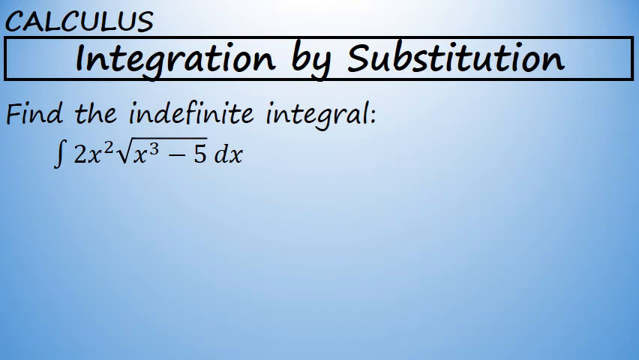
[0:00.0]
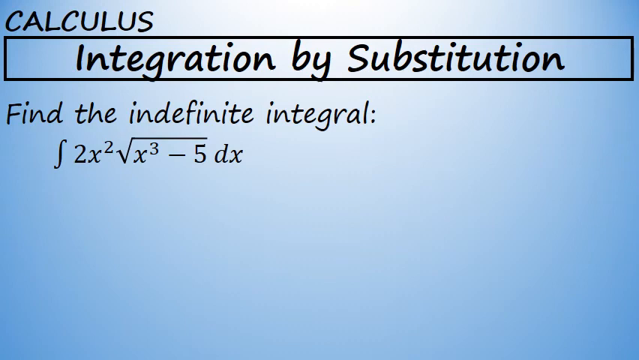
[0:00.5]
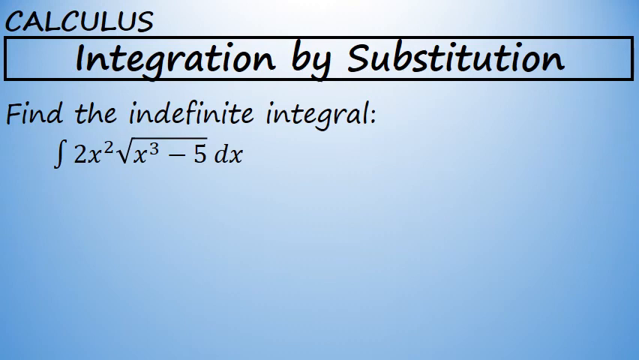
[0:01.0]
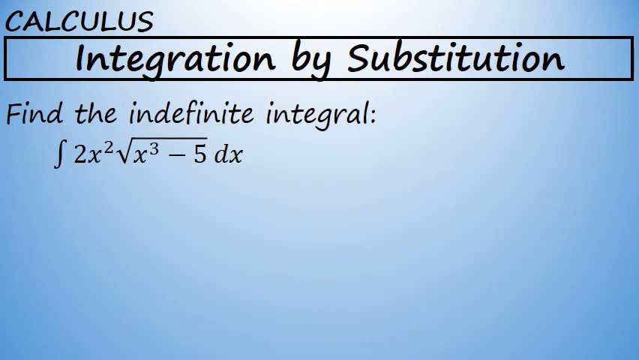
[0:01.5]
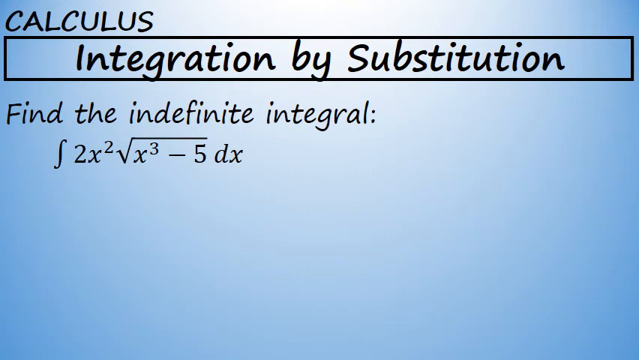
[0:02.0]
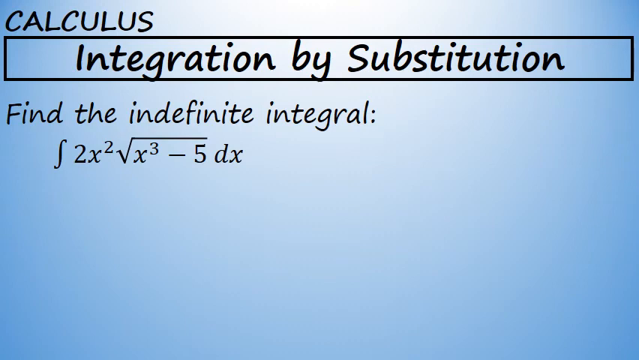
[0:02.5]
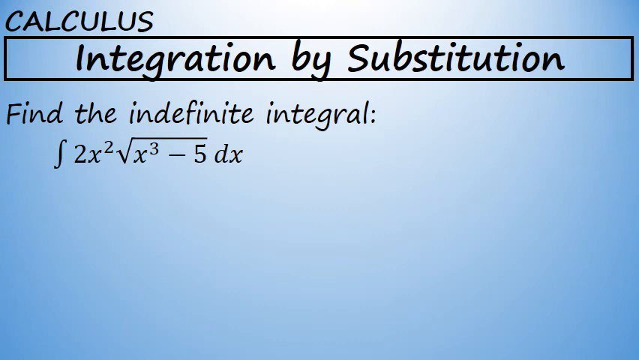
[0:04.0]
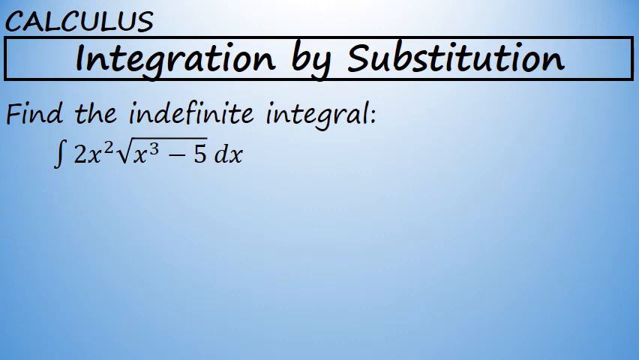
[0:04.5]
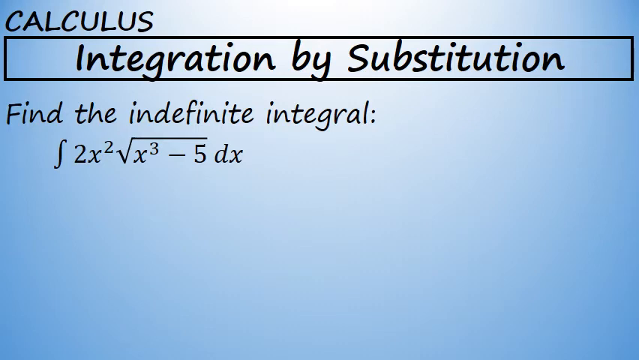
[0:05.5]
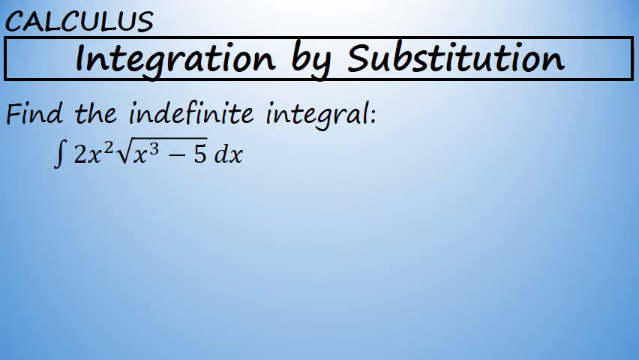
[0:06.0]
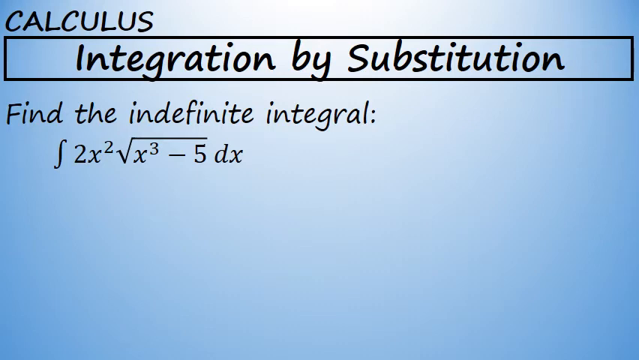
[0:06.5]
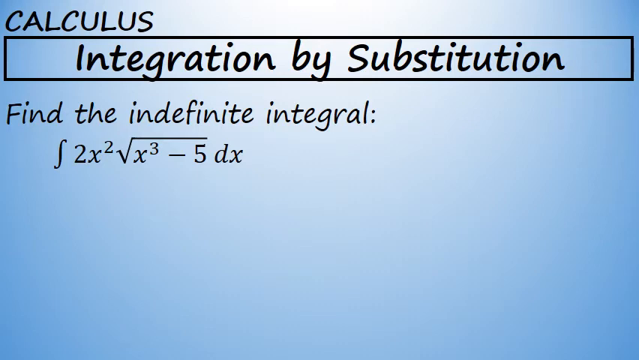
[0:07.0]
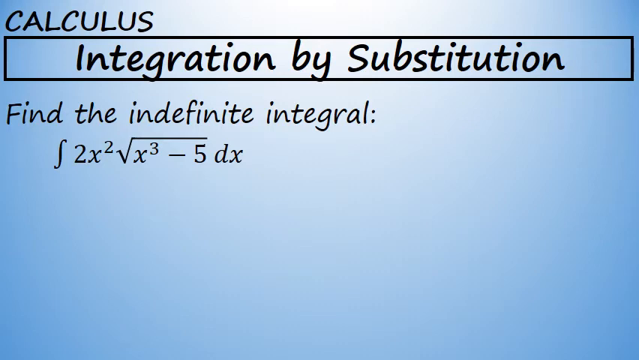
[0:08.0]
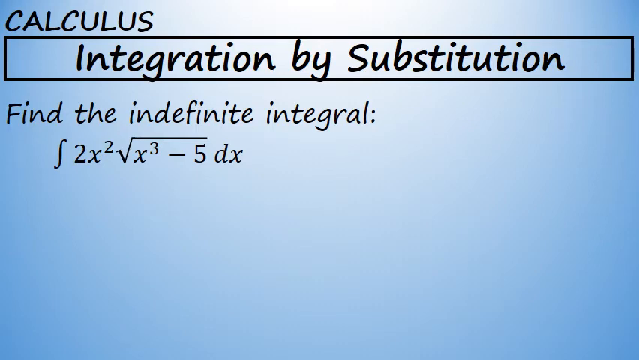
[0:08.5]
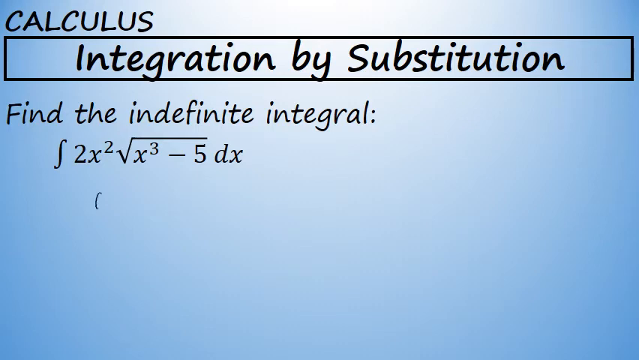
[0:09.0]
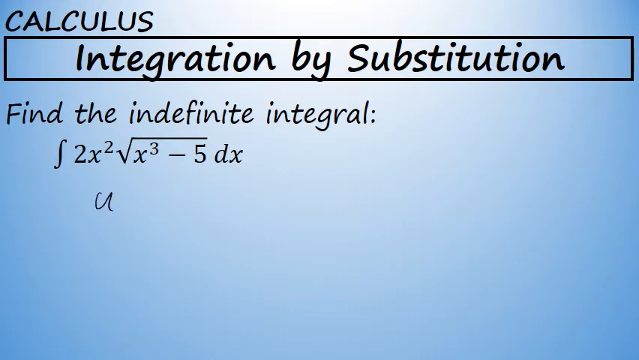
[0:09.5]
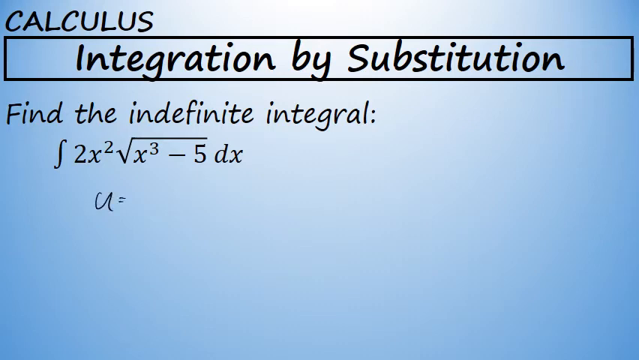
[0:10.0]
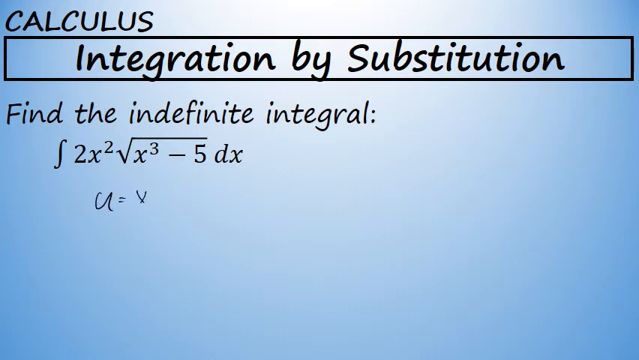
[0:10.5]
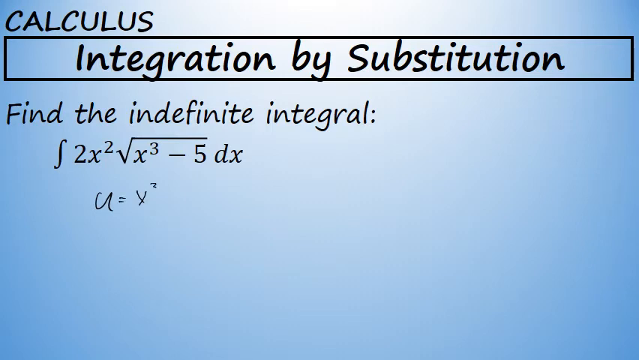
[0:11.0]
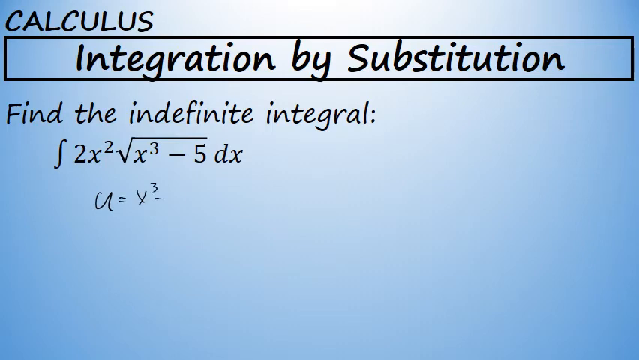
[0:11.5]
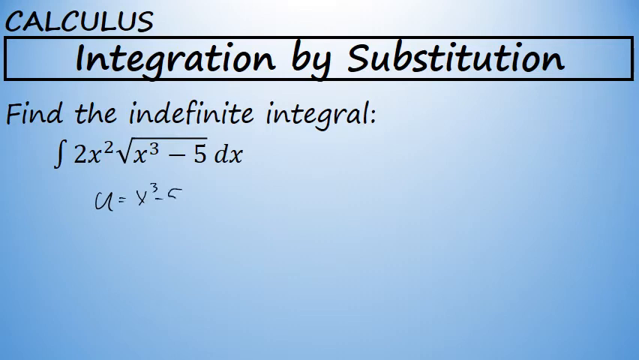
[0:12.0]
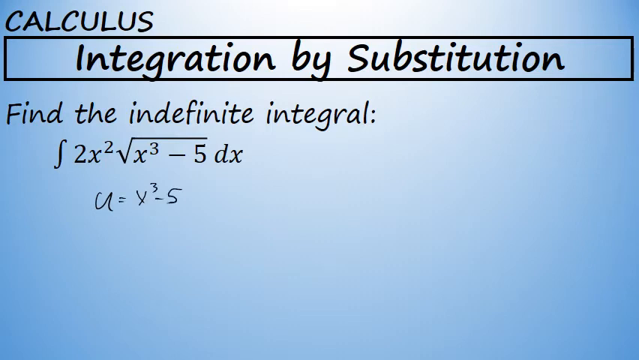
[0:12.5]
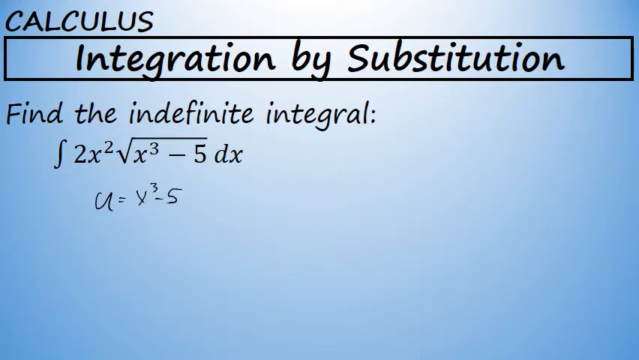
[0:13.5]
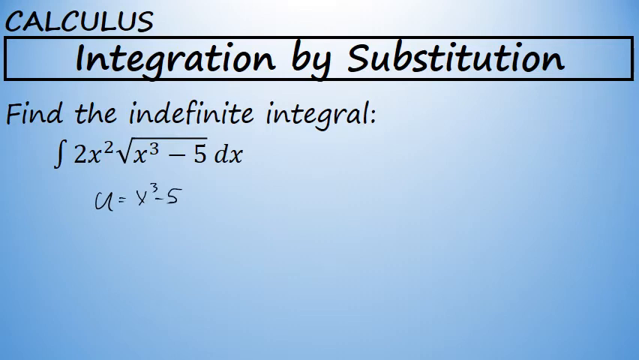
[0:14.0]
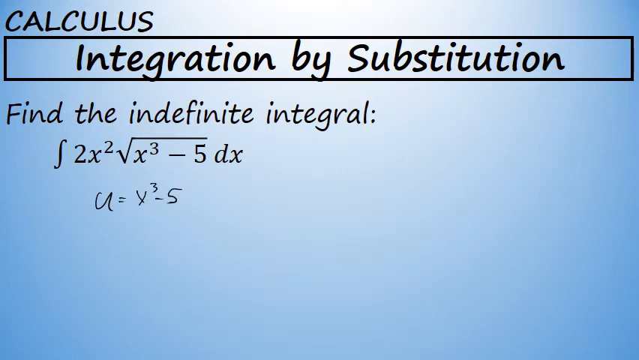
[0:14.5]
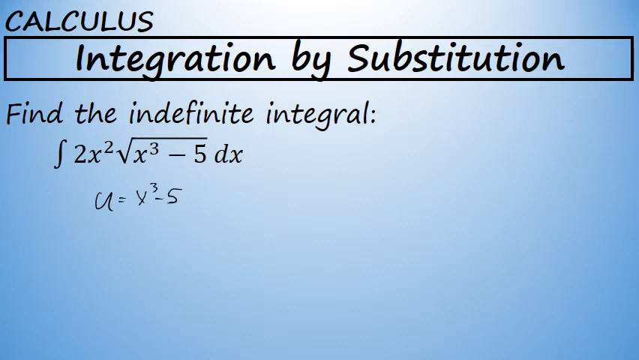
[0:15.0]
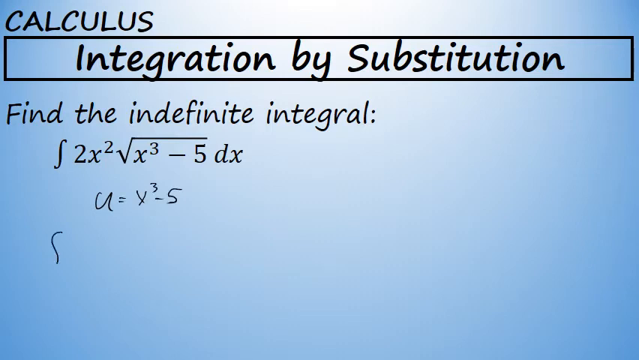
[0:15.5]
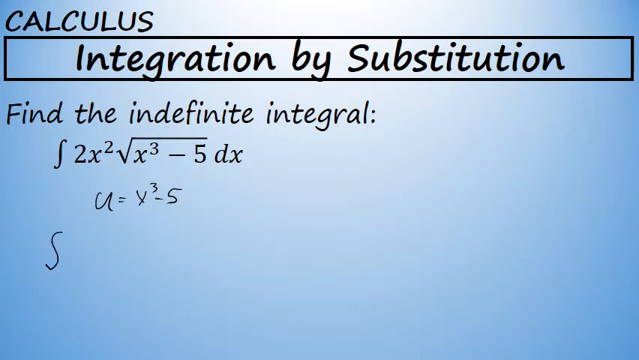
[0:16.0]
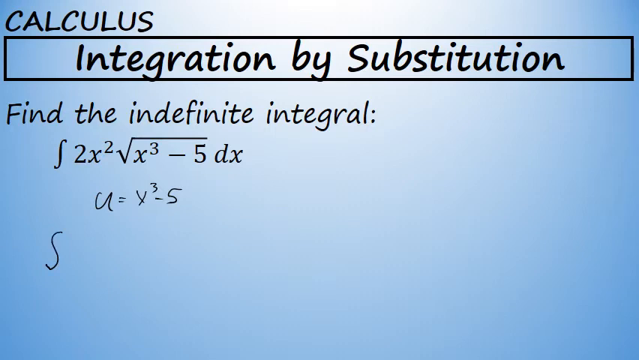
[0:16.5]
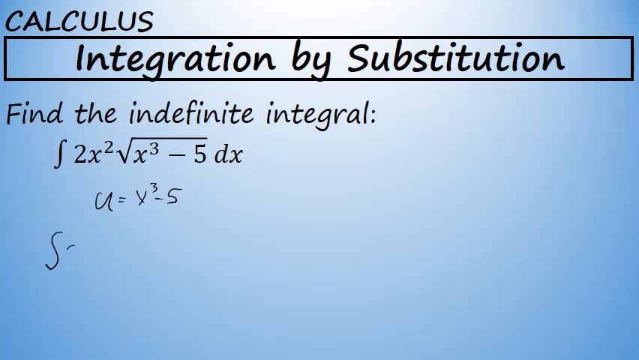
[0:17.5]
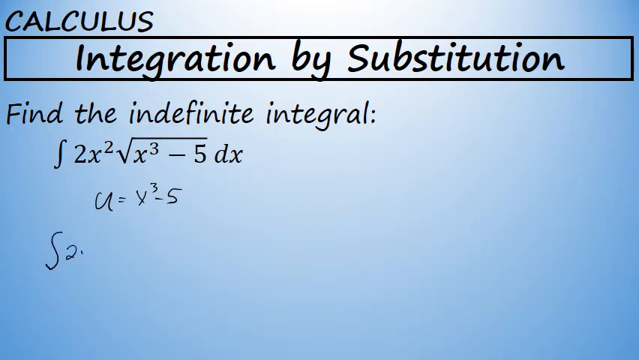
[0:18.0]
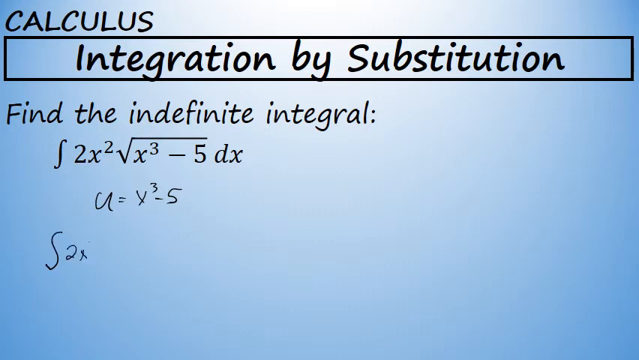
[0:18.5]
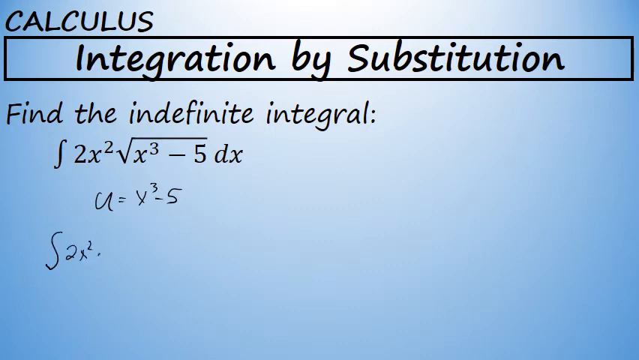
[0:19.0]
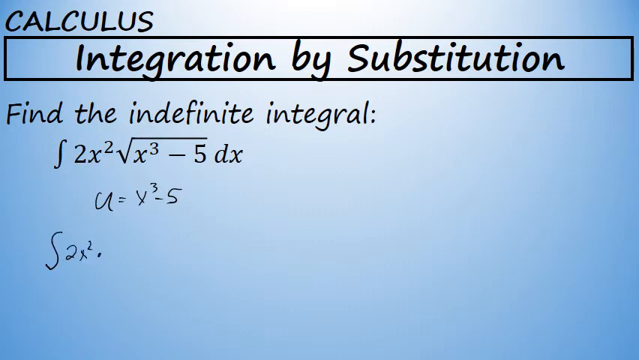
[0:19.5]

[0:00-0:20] The whole screen is blue, darker at the outer edges and growing lighter toward the middle, where it is almost white. In the top left corner the word "CALCULUS" is written in black. Beneath it, a rectangle drawn with a black line runs the whole width of the screen from left to right, and inside it, in black, is "INTEGRATION BY SUBSTITUTION". Below that is "FIND THE INDEFINITE INTEGRAL", and under that a 2, an x with a superscript 2, a long division sign, and on its other side an x with a superscript 3, a minus, a 5 and dx. Someone then writes u equals x superscript 3 minus 5.